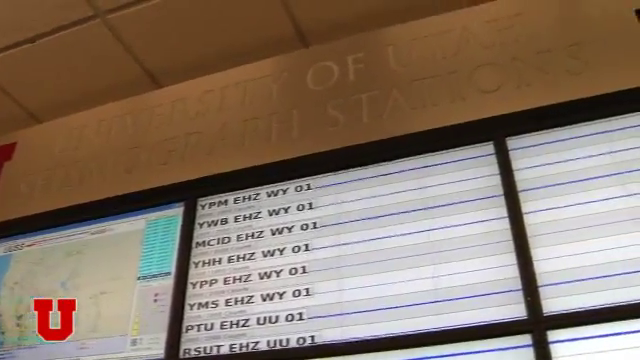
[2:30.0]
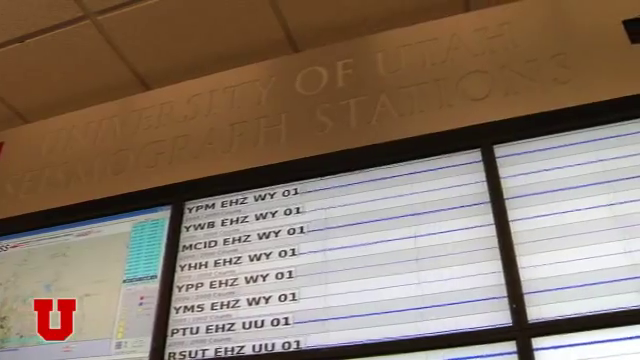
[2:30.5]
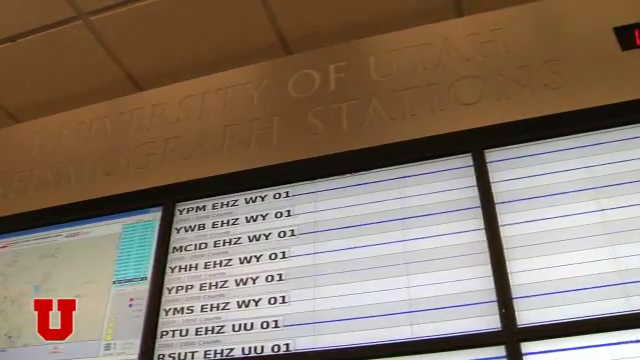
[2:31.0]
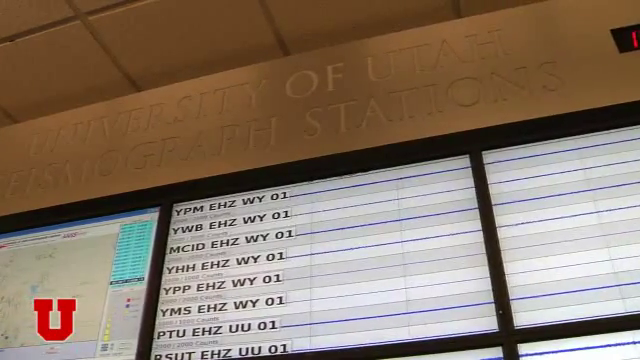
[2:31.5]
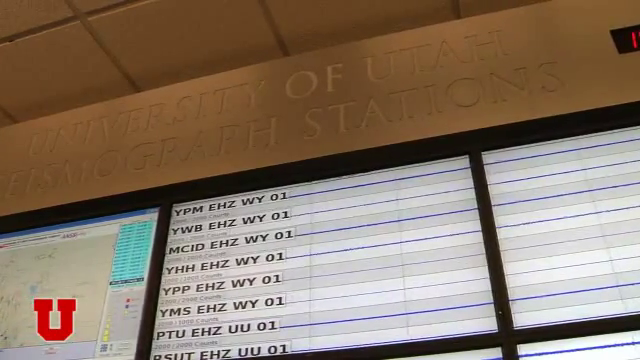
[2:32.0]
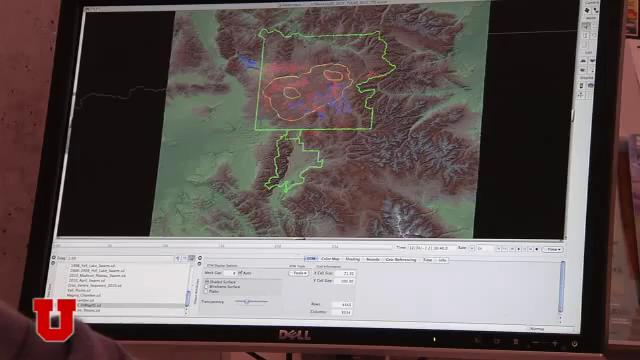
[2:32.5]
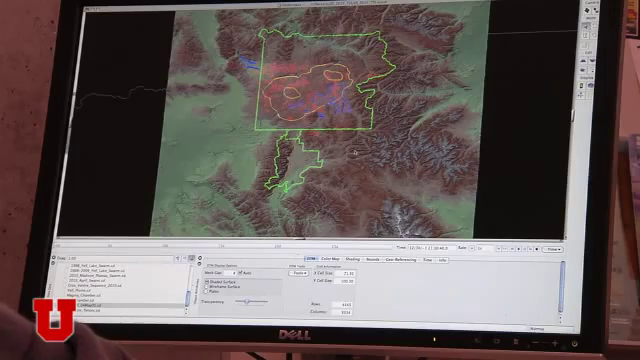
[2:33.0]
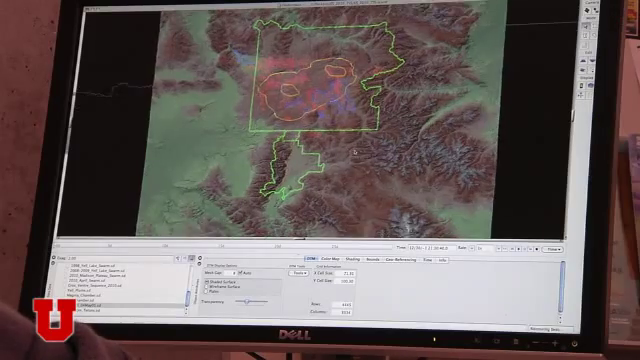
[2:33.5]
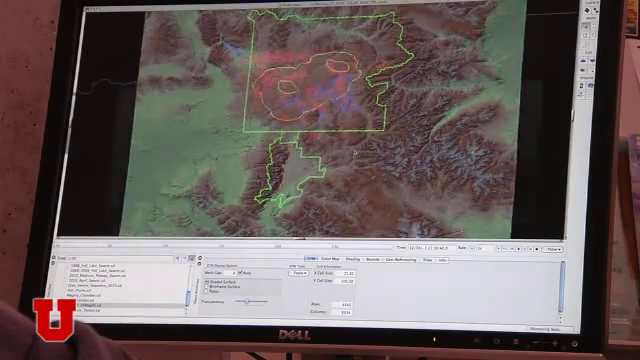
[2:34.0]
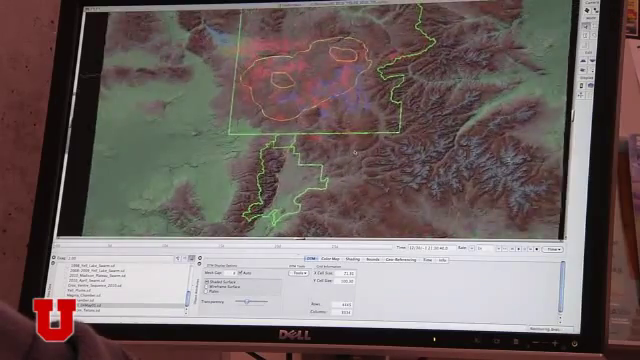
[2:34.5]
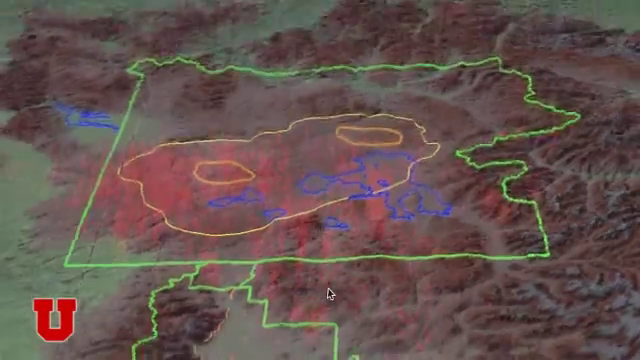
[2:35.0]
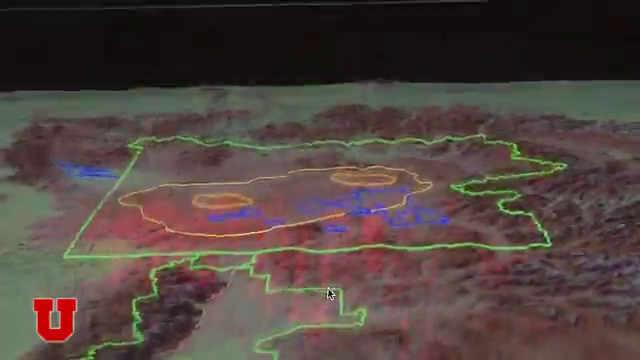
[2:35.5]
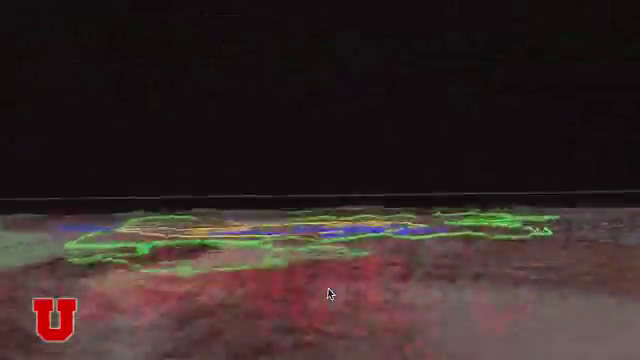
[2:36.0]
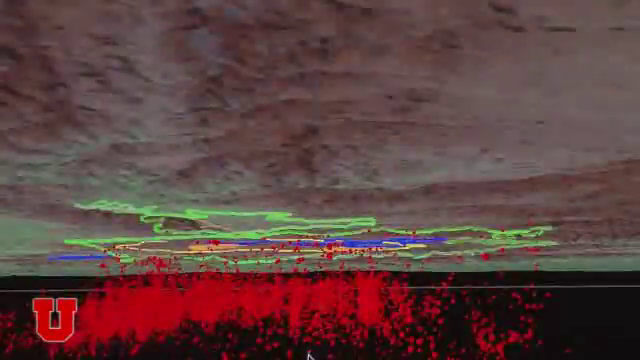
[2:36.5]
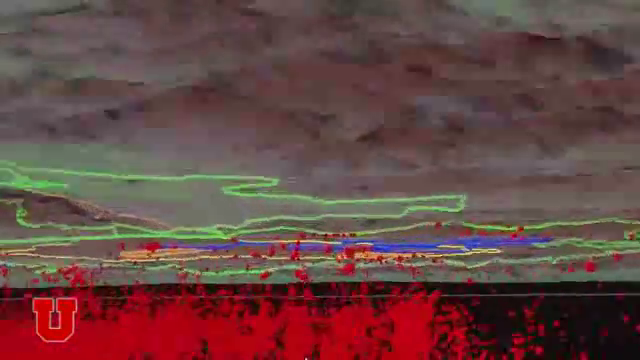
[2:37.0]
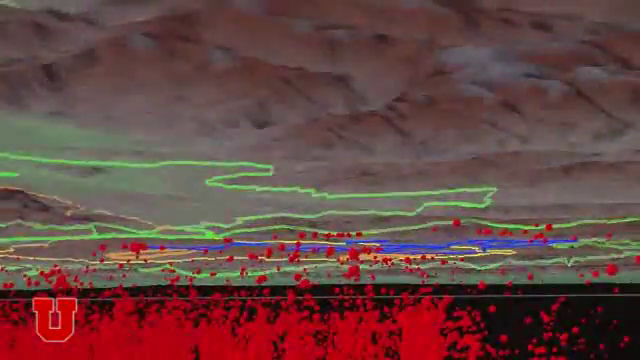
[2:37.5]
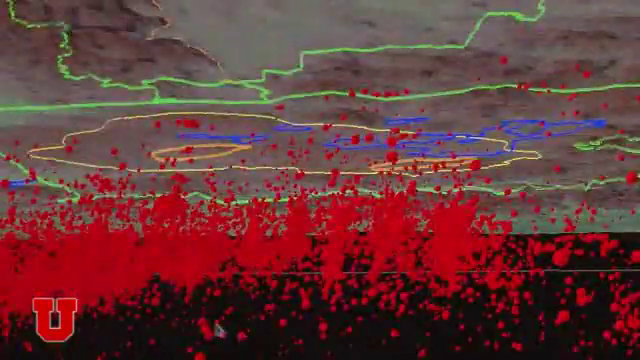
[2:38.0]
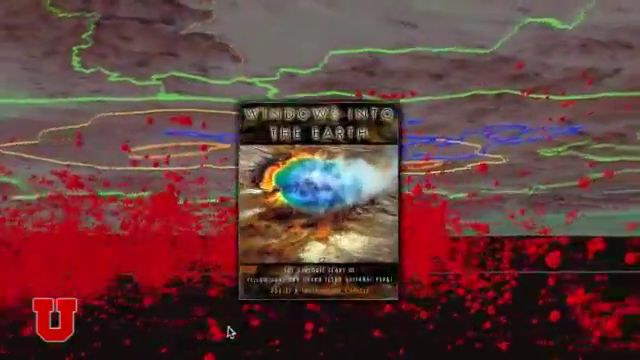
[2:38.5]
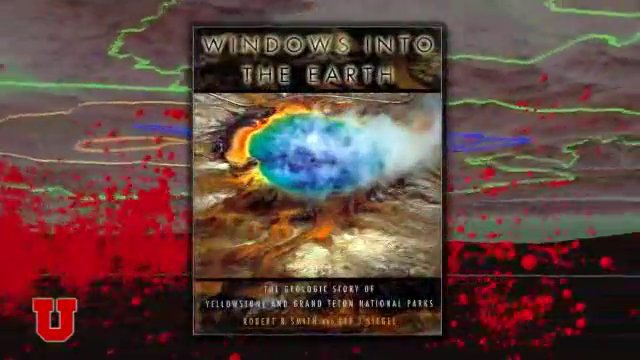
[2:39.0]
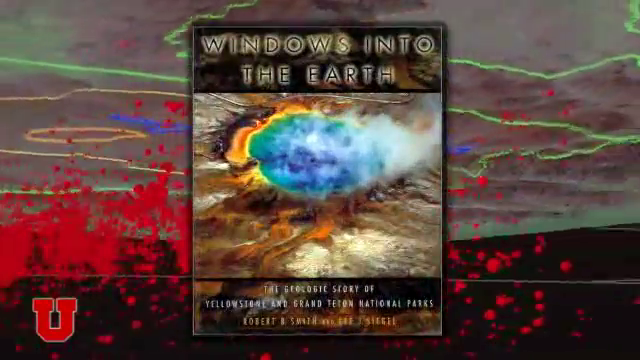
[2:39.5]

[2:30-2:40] Part of the screens seen earlier is shown, apparently with topography, followed by an unidentifiable 3D map. Very briefly, a picture of a sign appears that says "windows into the earth."